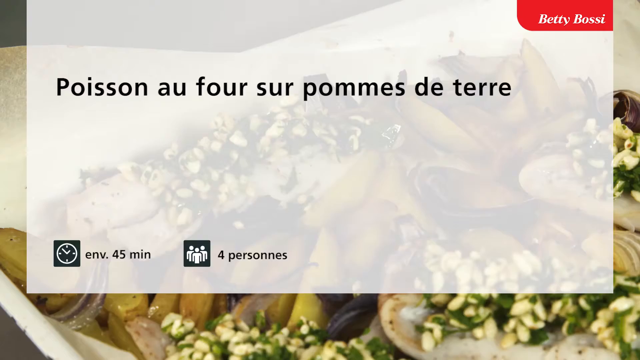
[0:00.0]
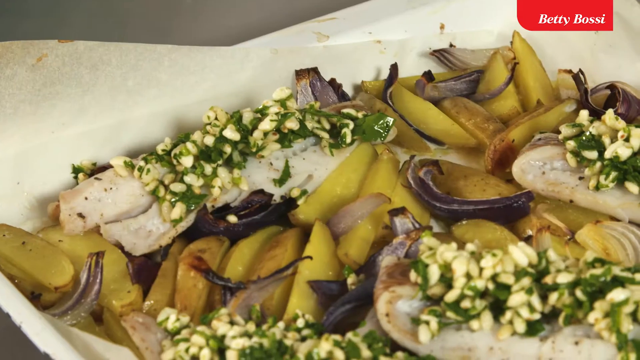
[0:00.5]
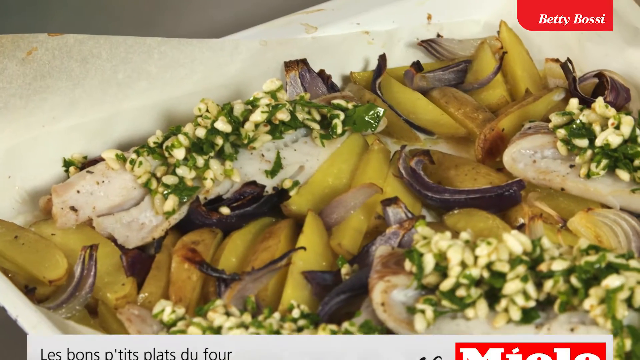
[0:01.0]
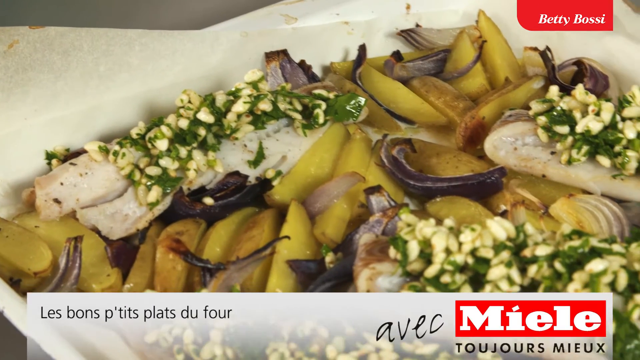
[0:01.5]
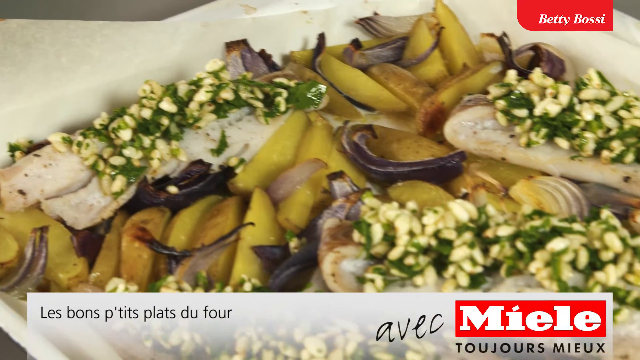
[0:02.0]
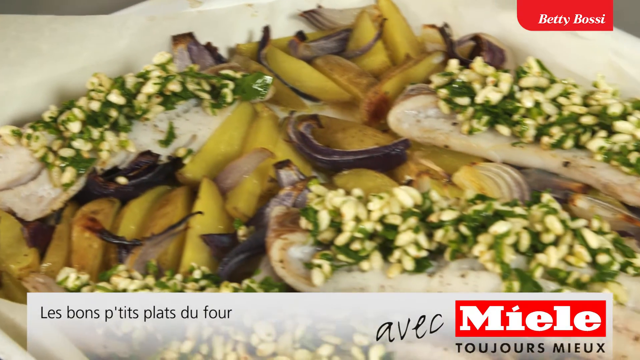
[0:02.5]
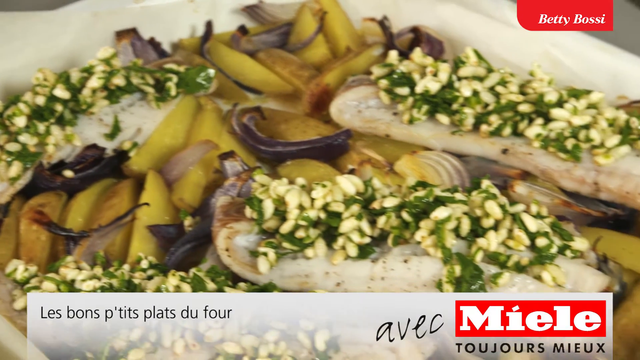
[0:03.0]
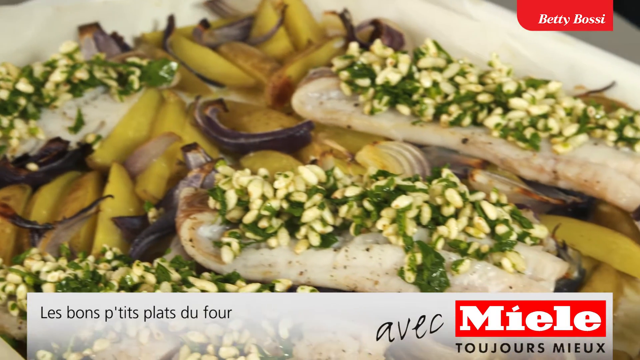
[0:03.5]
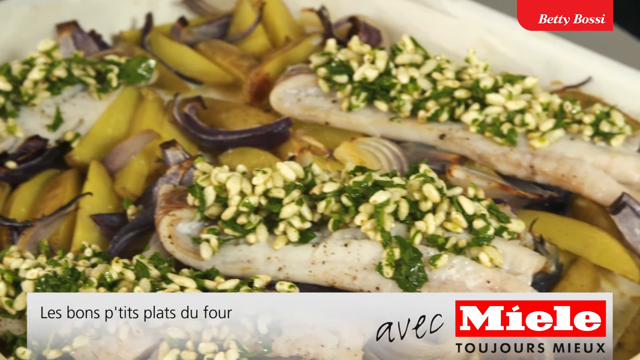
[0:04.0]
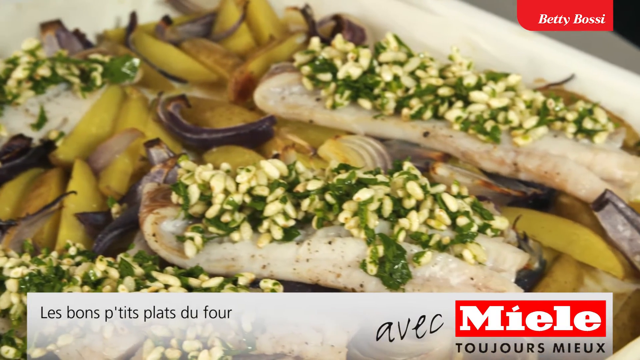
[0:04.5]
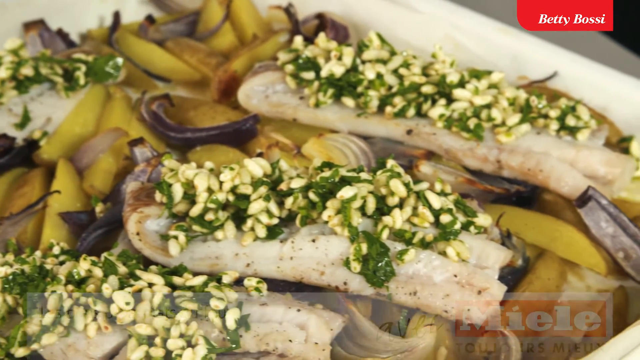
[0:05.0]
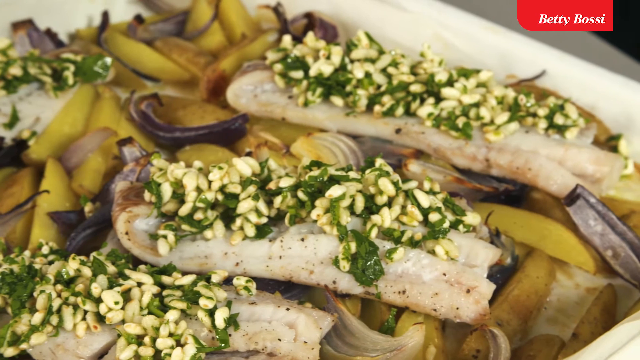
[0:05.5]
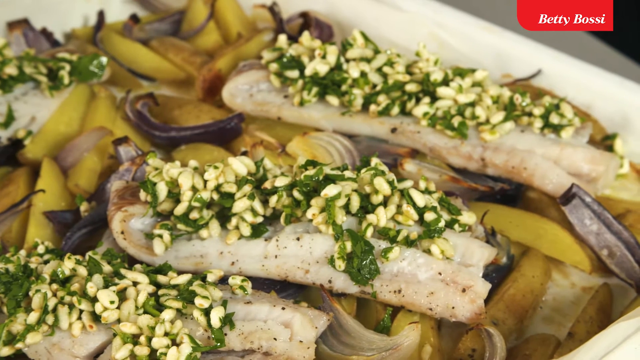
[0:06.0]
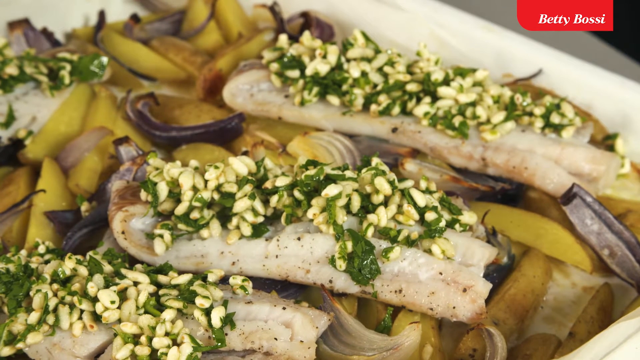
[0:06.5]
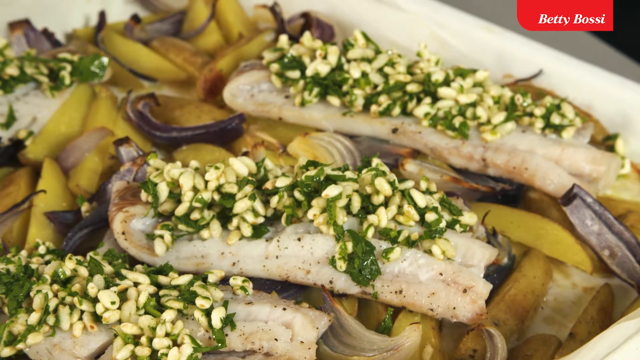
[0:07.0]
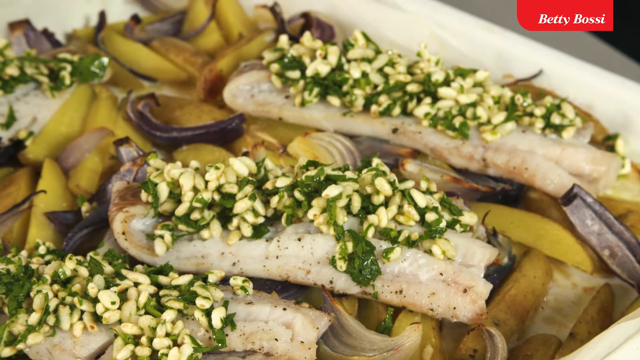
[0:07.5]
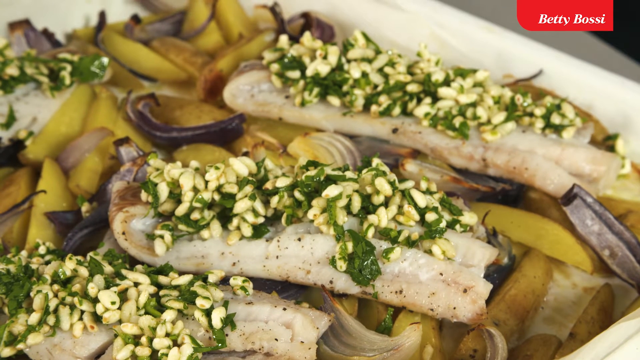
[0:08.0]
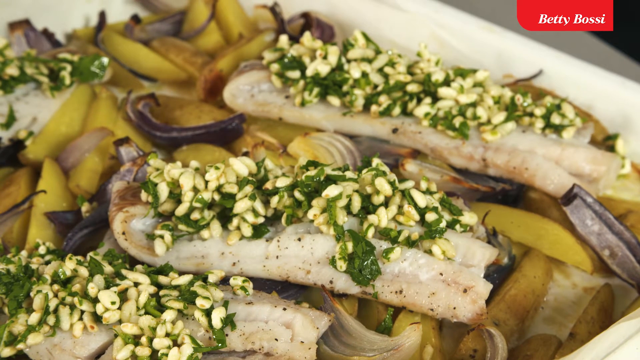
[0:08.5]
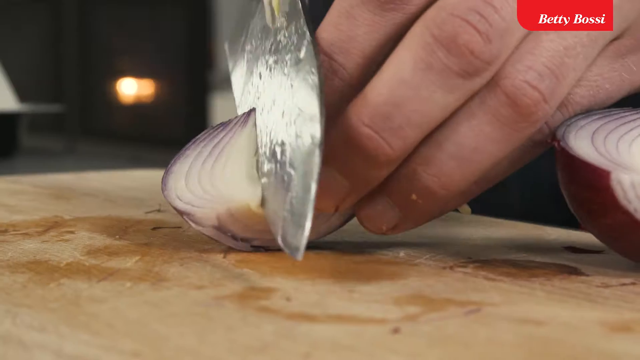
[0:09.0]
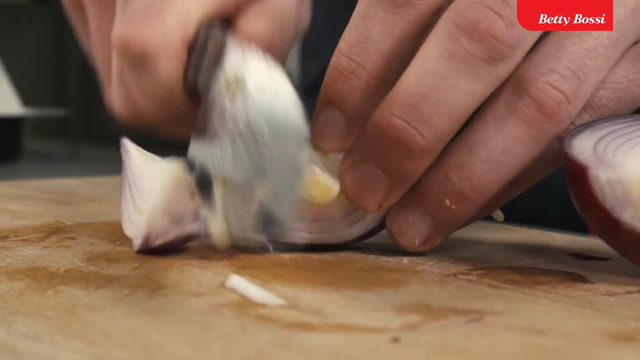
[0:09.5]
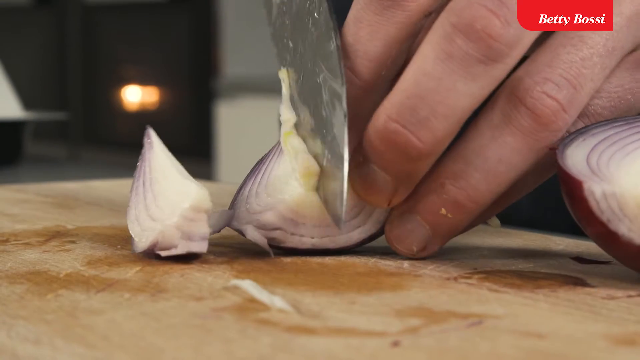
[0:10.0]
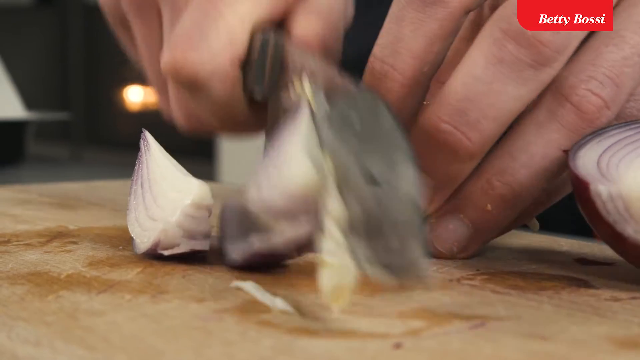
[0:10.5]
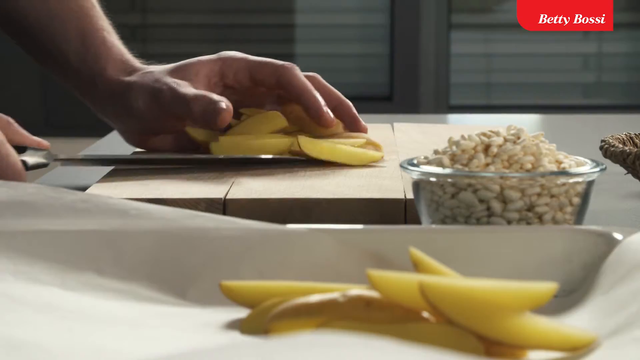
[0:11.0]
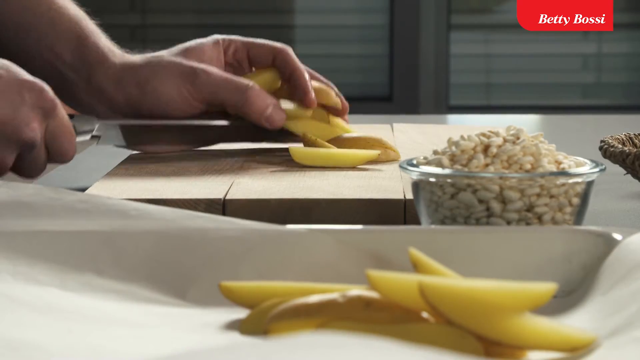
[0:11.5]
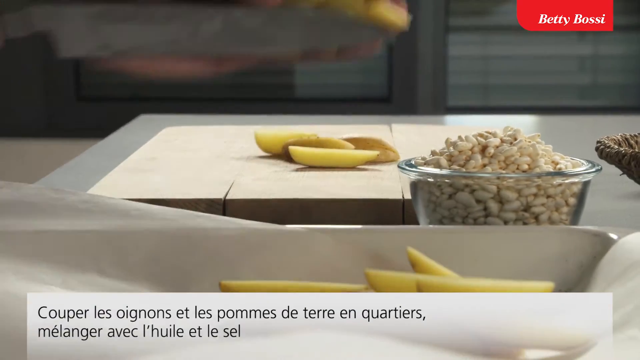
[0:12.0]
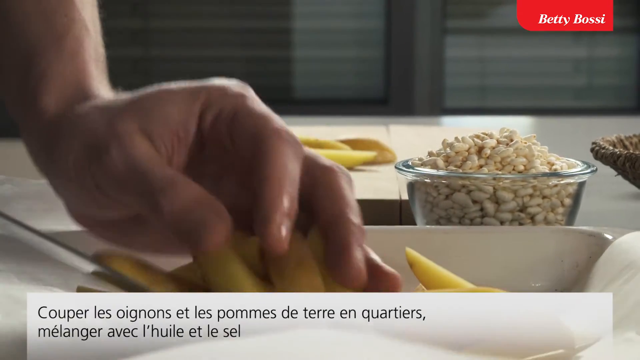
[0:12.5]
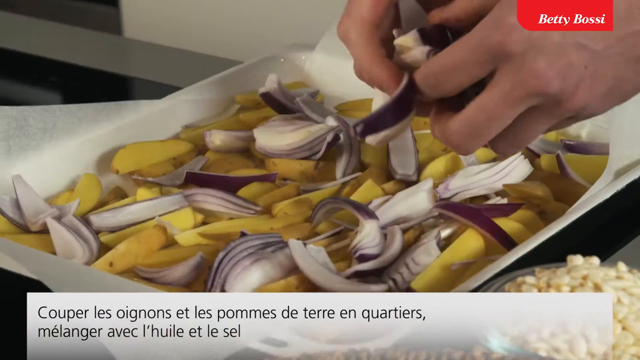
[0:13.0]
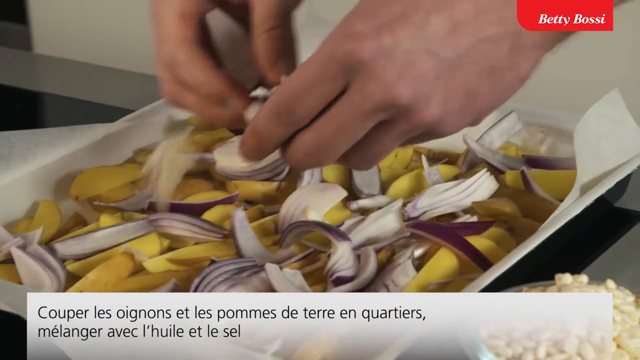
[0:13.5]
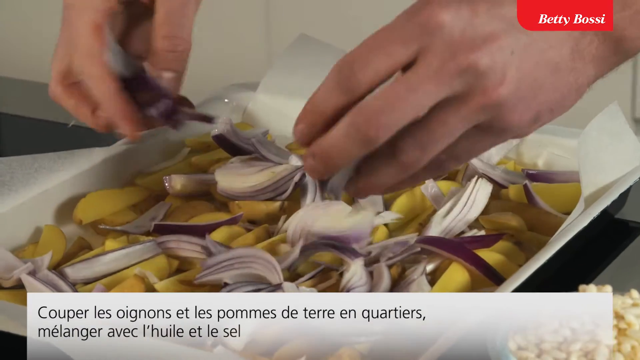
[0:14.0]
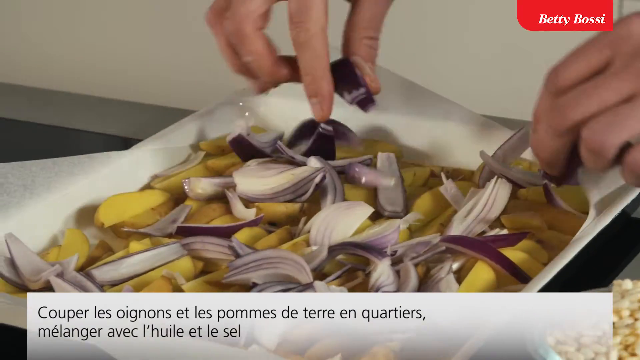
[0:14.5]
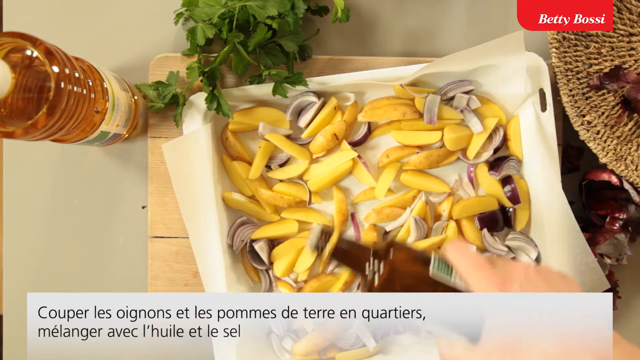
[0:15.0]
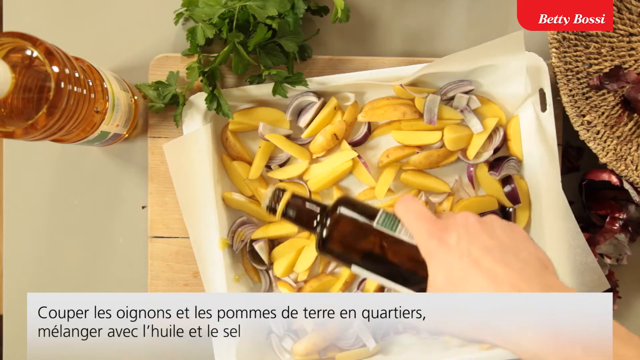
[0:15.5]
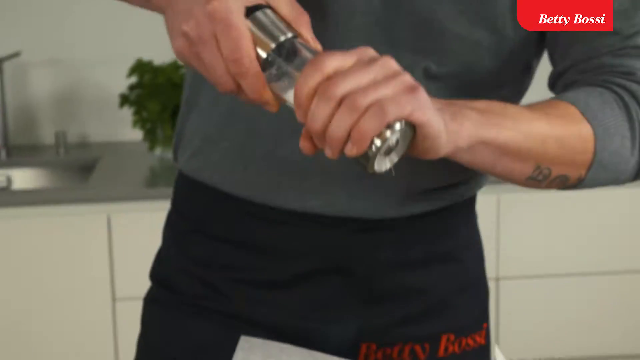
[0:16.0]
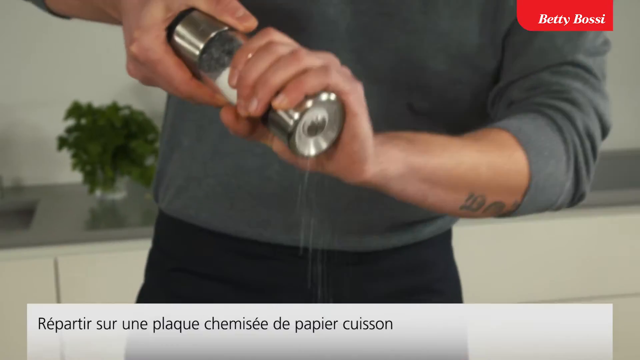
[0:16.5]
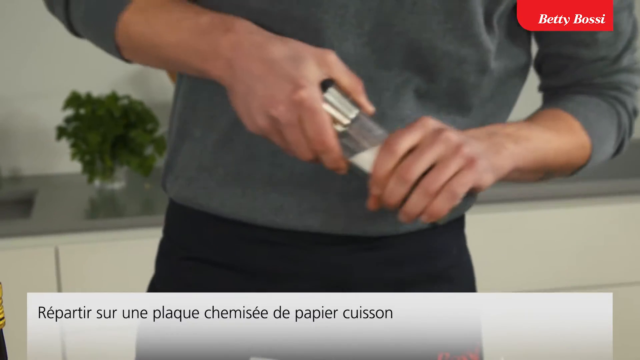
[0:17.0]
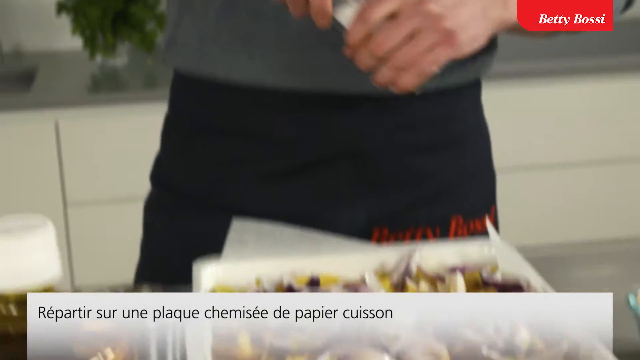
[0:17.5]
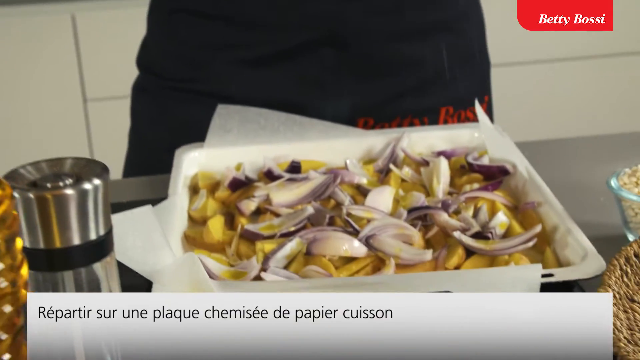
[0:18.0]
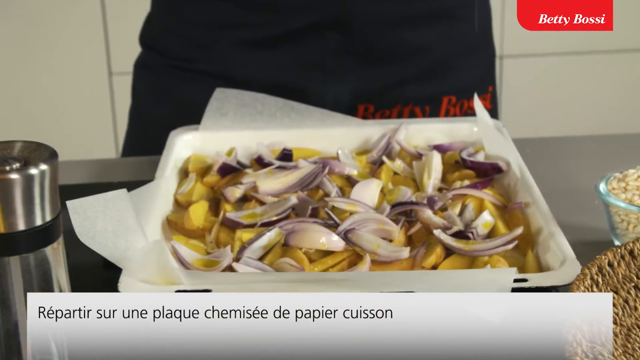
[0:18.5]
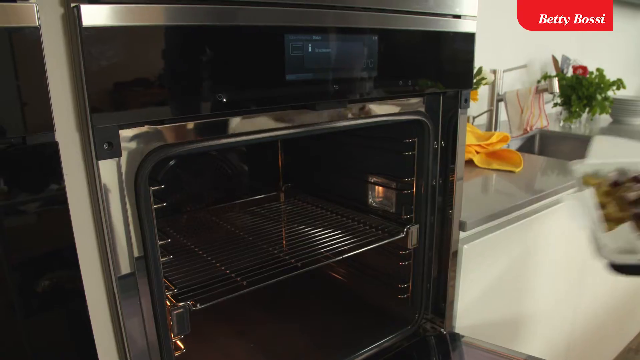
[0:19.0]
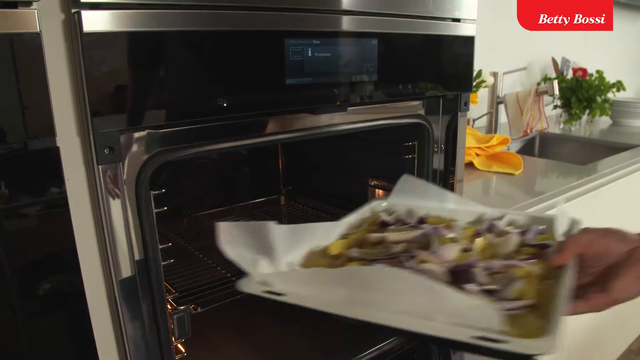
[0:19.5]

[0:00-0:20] A close-up view shows a finished meal that looks quite elaborate, with what looks like grains, cut-up green leafy vegetables, and different vegetables that cannot be identified. Next, a hand begins to prep onions, slicing them into thick chunks. The hand then preps potatoes, cutting them into wedges, and the potato wedges are placed in a parchment-lined baking tray. The onions garnish the top of the potato wedges. The person then grates some salt from a salt shaker over the potatoes and onions, and the onions are placed inside an oven to begin cooking. Across the screen, text reads "Poisson au four sur pommes de terre," the French name of the recipe.